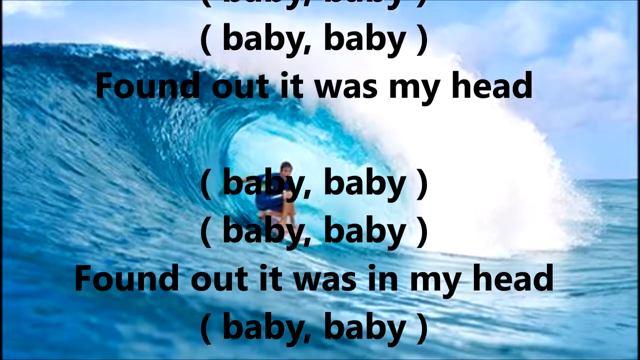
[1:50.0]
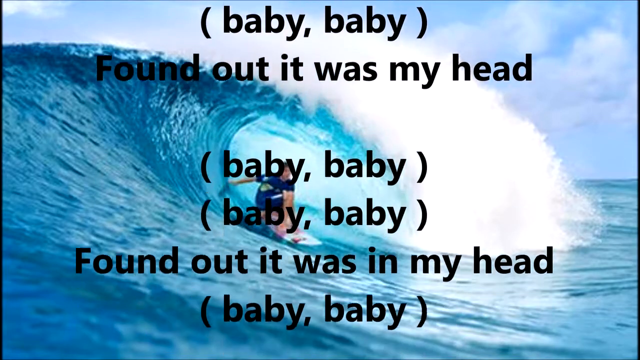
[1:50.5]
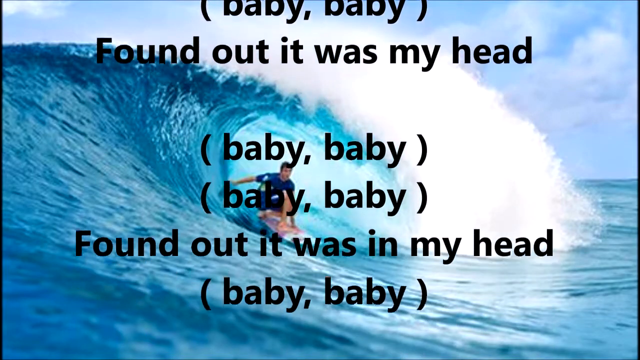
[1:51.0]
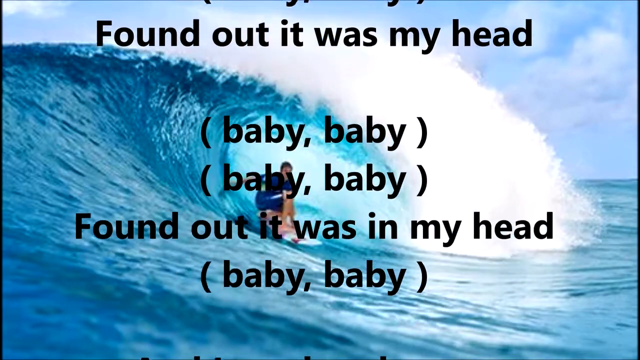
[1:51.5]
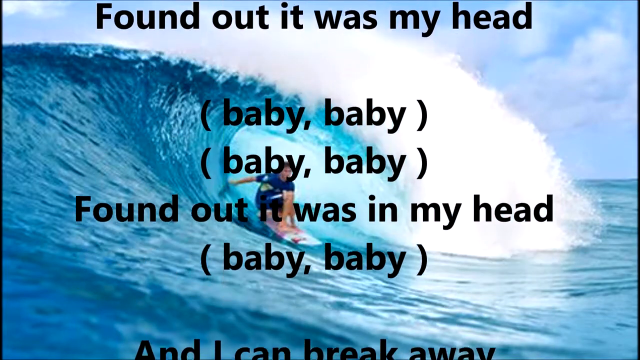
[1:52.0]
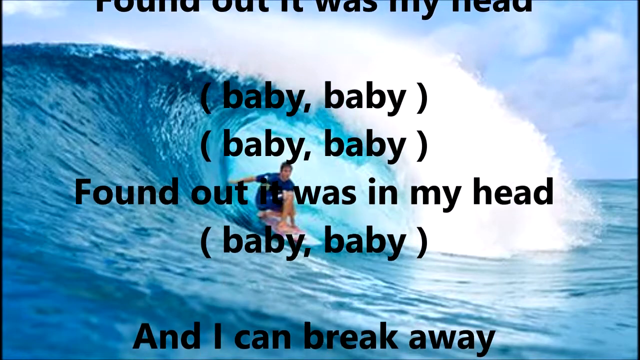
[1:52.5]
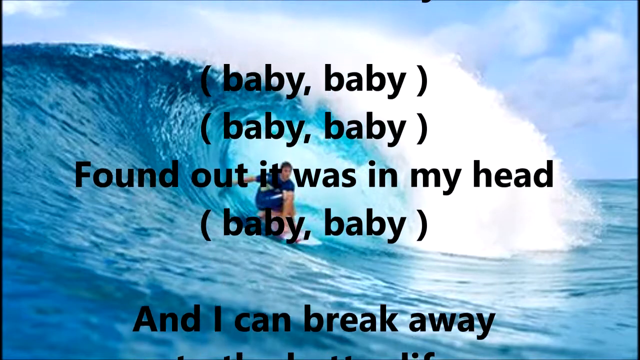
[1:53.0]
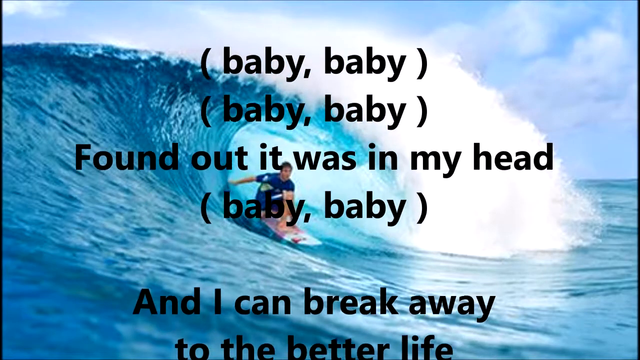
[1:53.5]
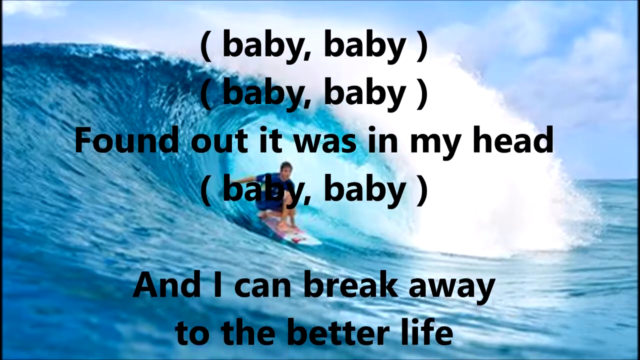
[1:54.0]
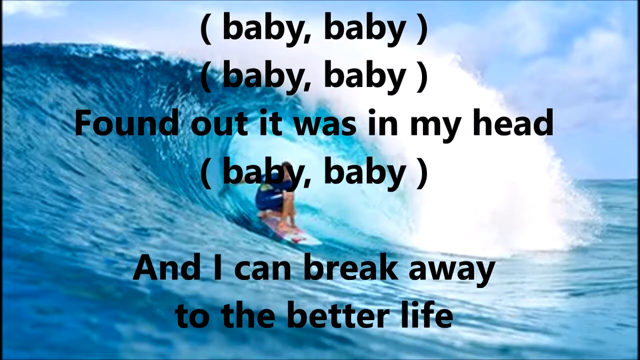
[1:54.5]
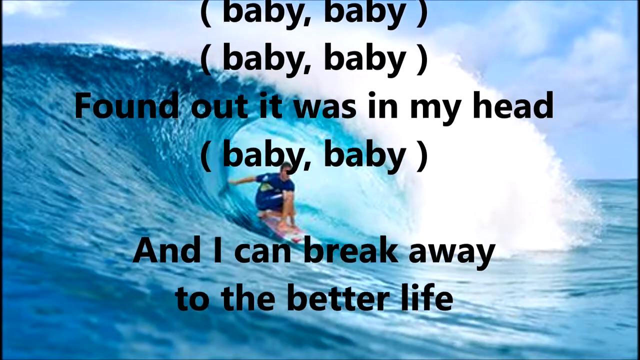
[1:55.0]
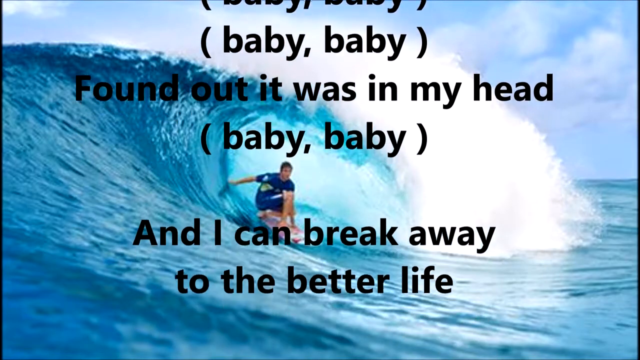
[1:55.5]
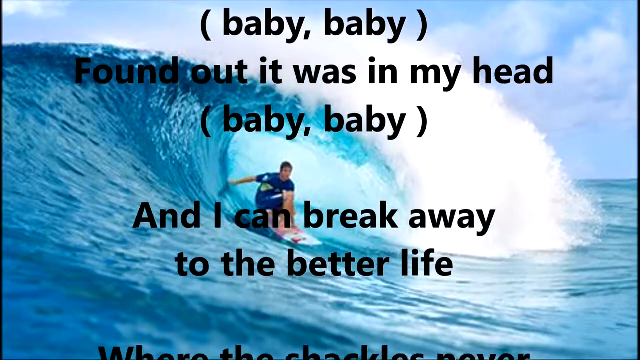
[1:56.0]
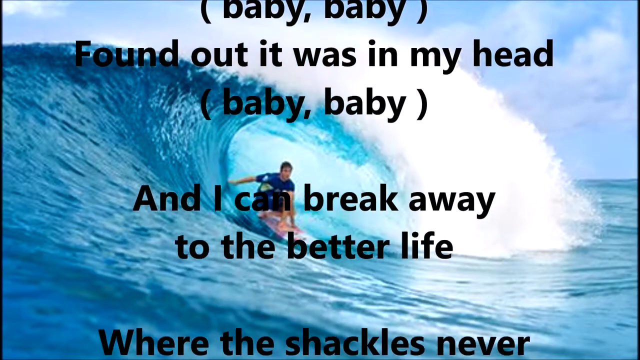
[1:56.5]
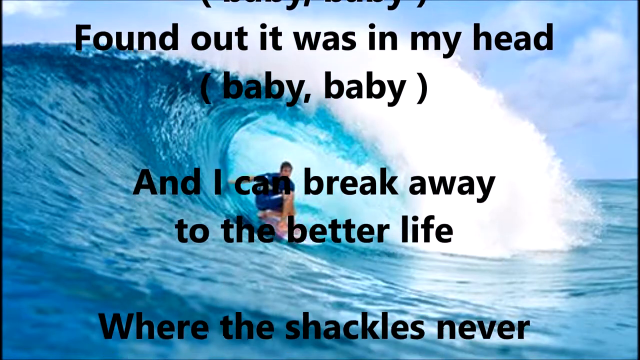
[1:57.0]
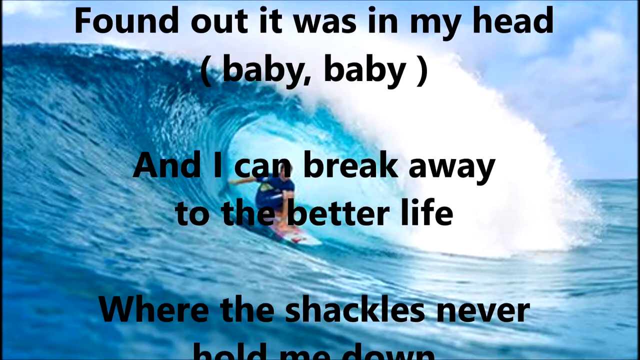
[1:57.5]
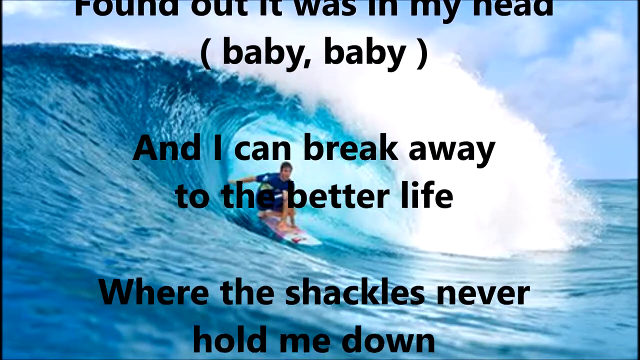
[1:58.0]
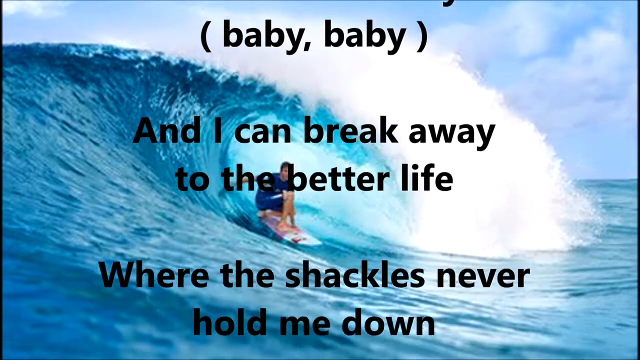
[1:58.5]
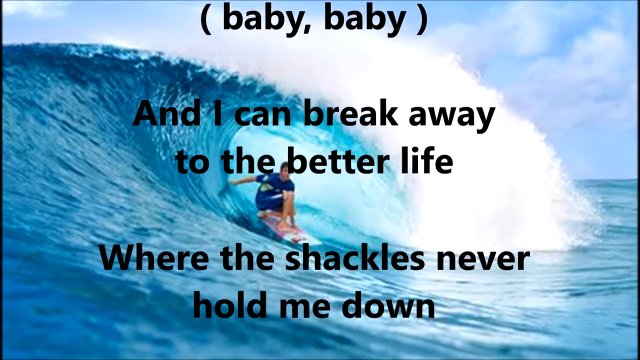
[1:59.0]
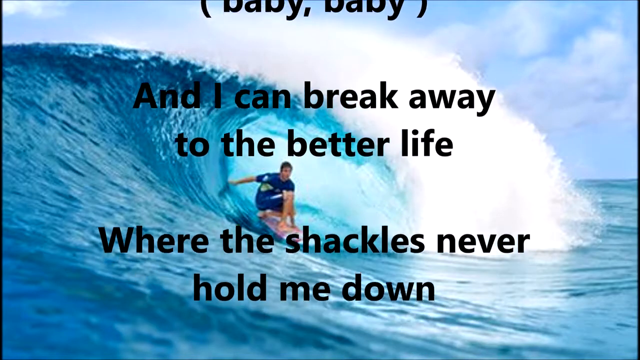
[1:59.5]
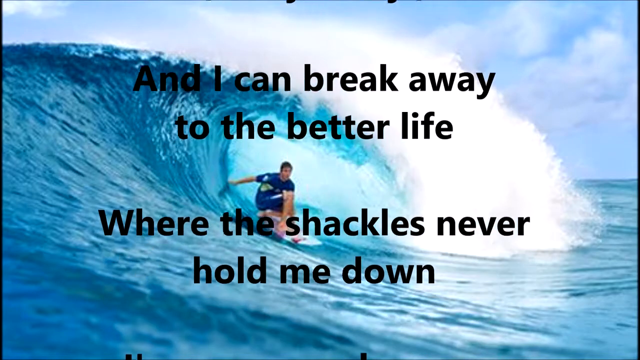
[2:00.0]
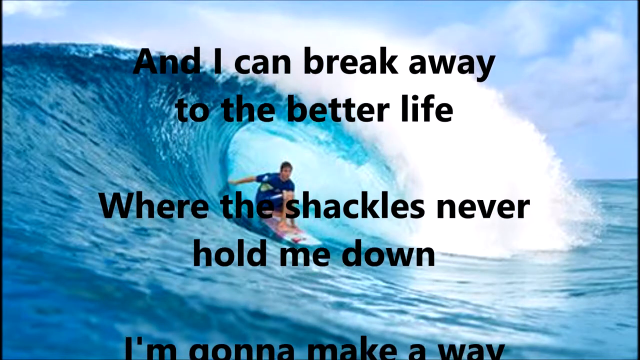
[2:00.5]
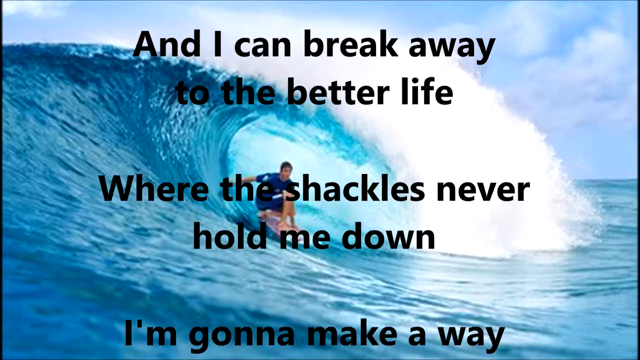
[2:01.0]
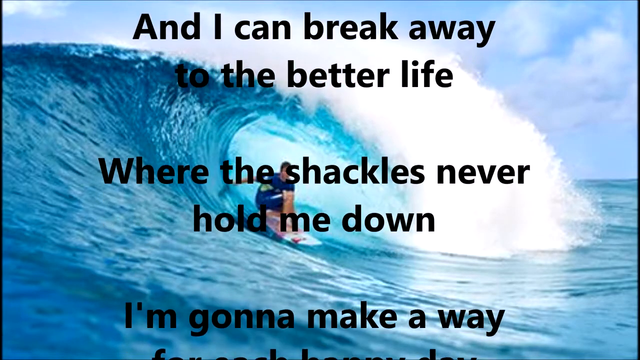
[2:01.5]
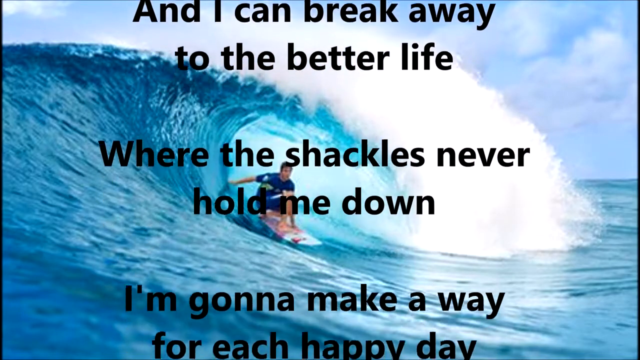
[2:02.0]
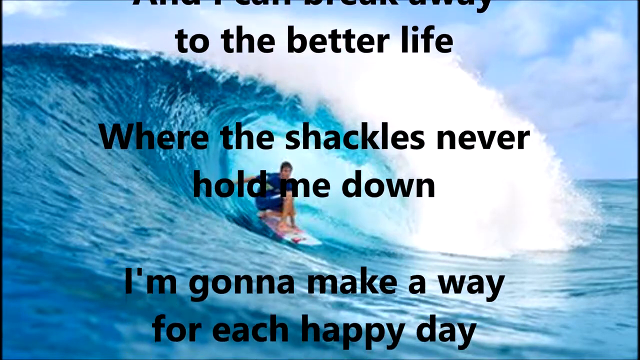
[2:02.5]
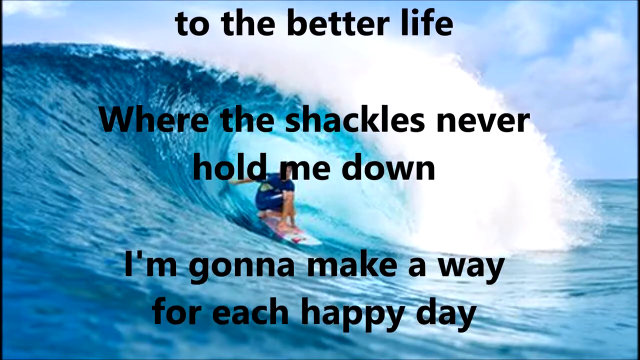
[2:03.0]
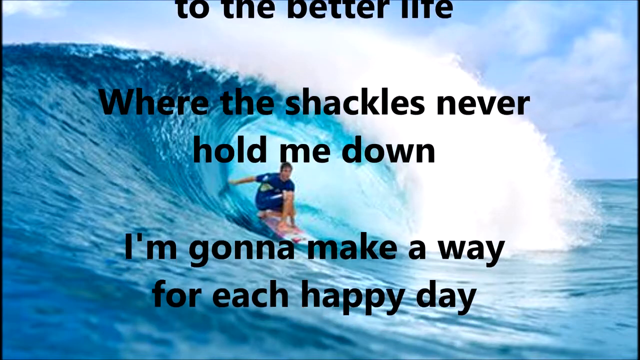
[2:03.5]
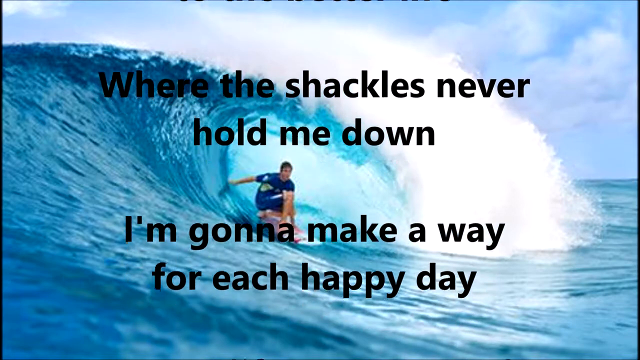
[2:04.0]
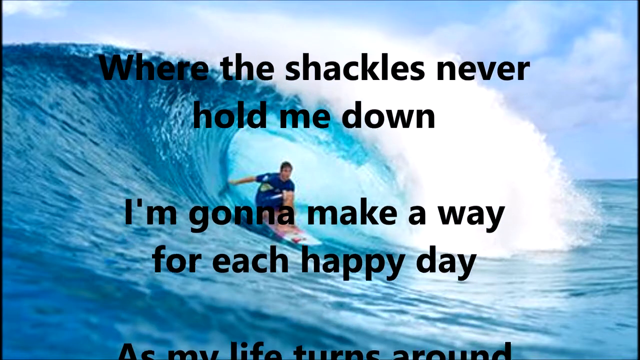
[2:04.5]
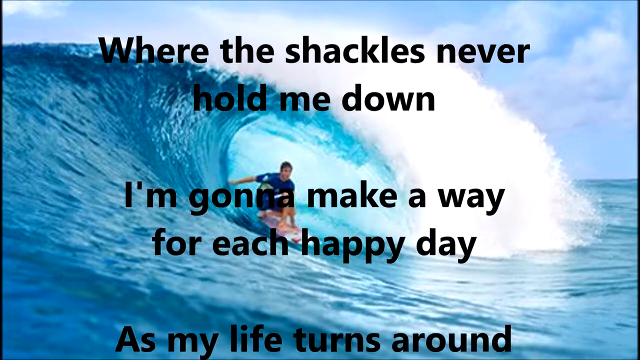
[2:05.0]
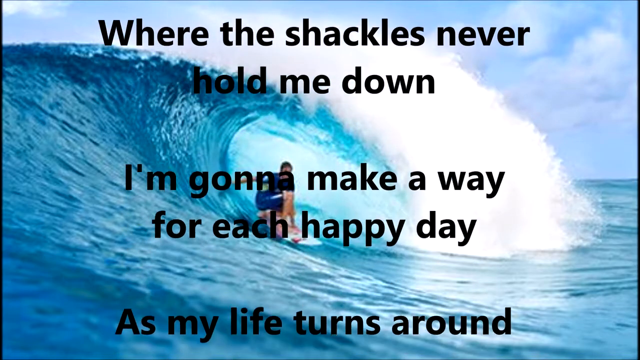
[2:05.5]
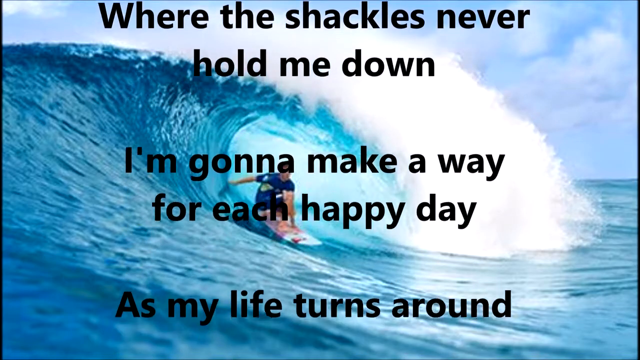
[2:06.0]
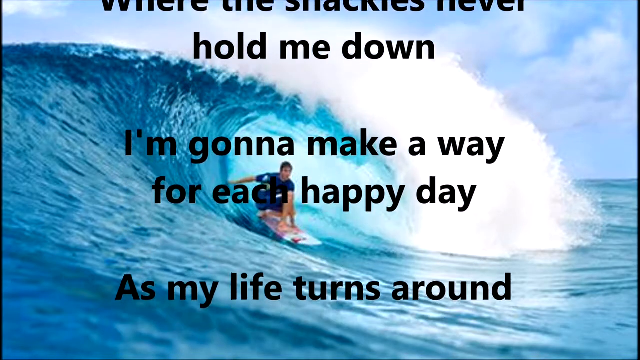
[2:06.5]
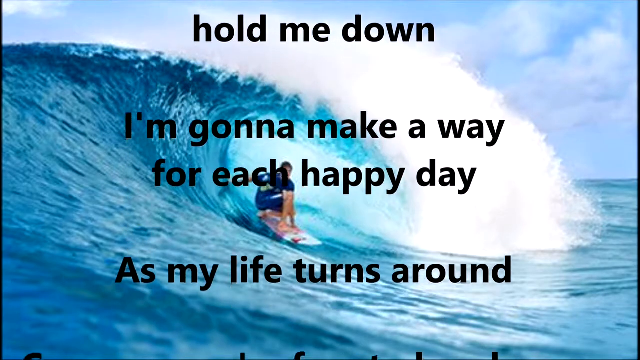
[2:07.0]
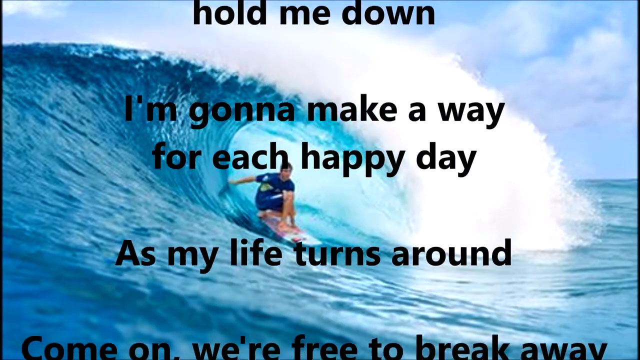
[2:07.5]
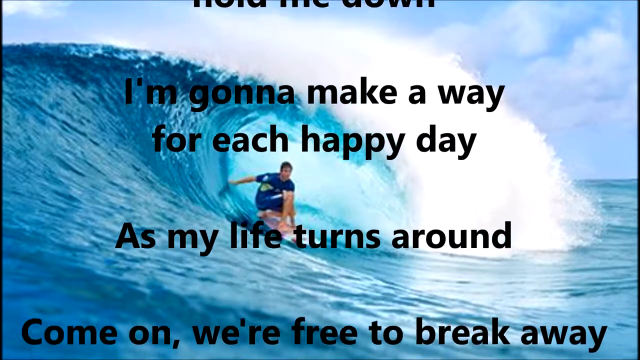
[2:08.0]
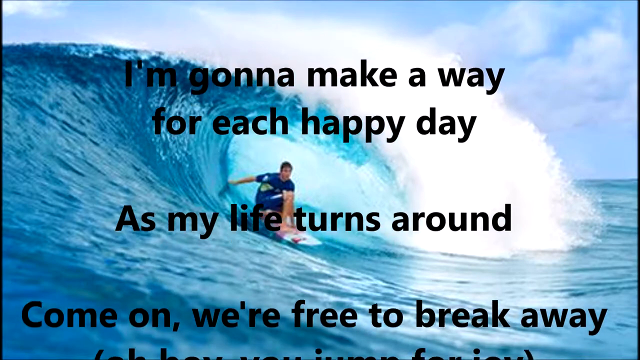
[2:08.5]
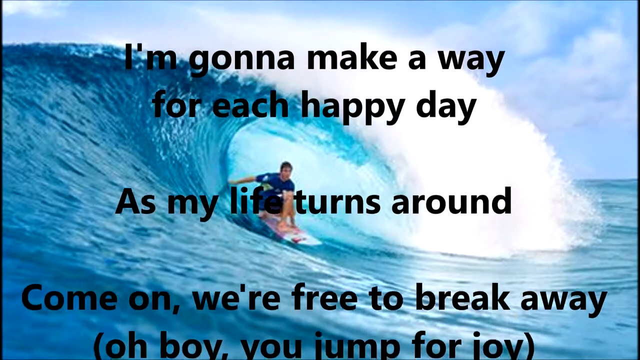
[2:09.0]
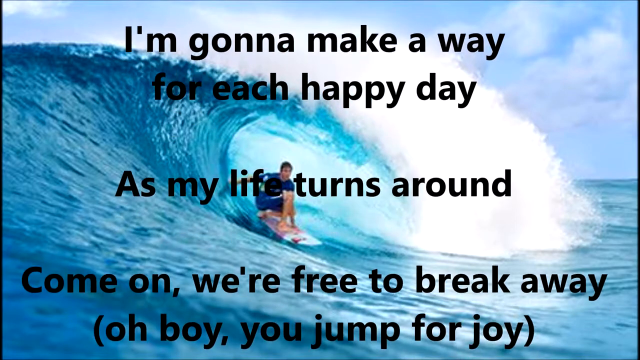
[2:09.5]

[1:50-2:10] The next lyrics read "and I can break away to the better life, then where the shackles never hold me down. And then I'm gonna make a way for each happy day as my life turns around. Come on, we're free to break away," with parentheses. Directly under that is another line in parentheses, seemingly a backup singer's part, reading "oh boy, you jump for joy." At certain points, where the lyrics pass over the body of the surfer, the letters are a little more difficult to read.